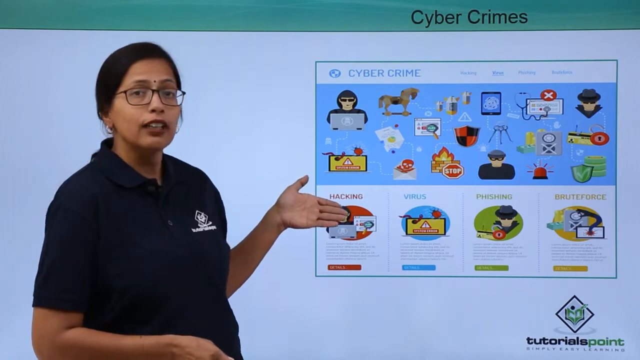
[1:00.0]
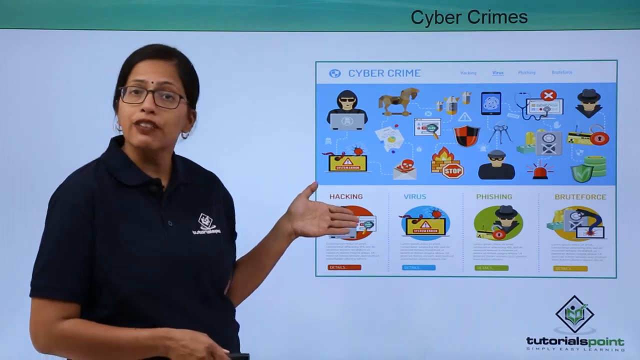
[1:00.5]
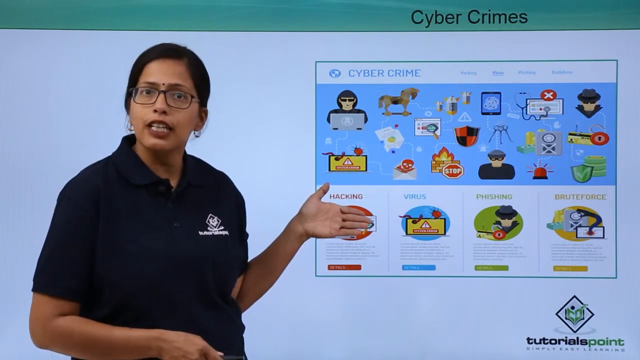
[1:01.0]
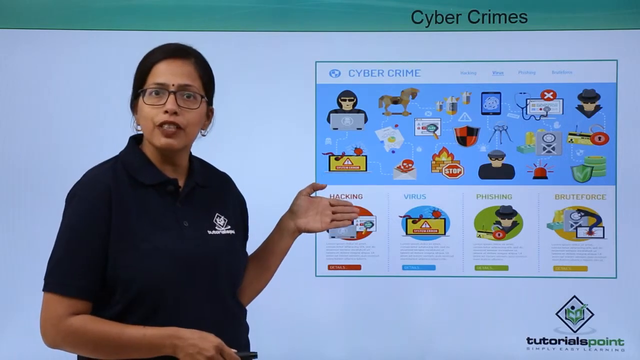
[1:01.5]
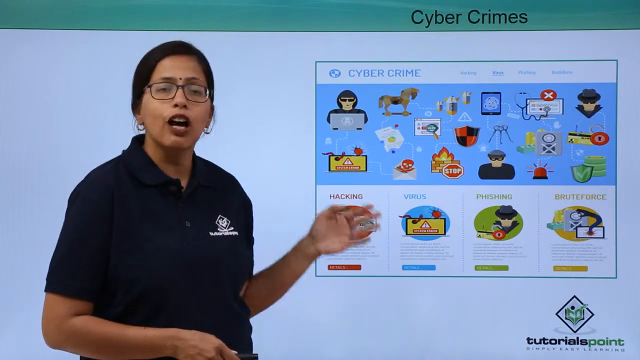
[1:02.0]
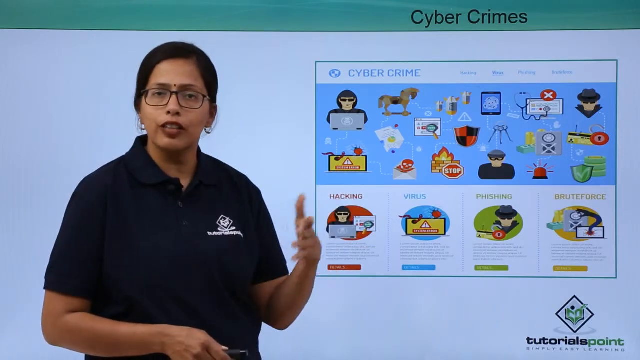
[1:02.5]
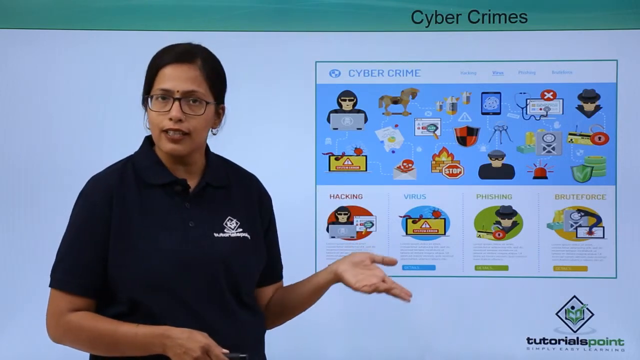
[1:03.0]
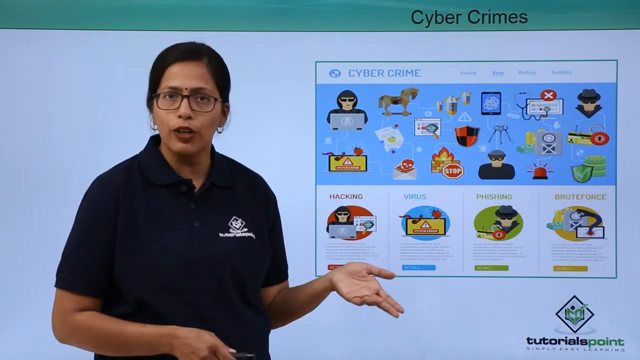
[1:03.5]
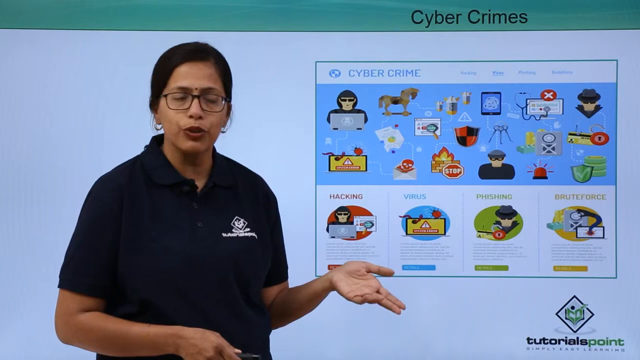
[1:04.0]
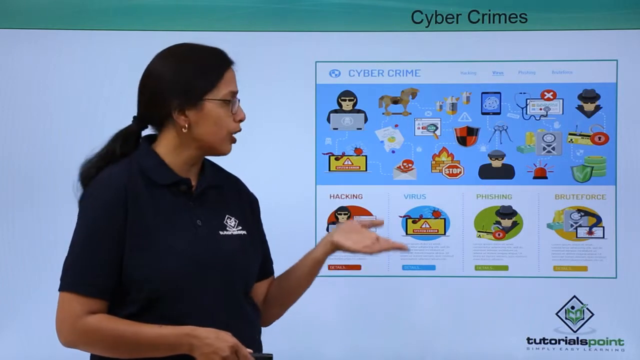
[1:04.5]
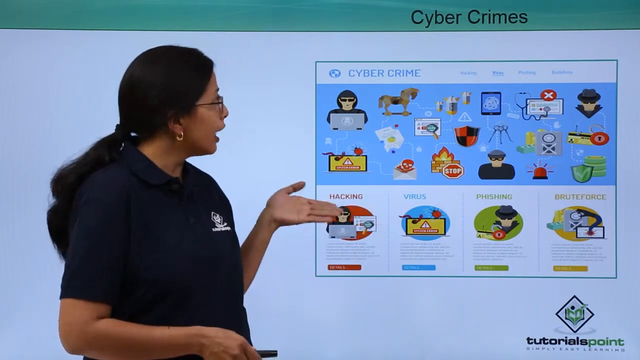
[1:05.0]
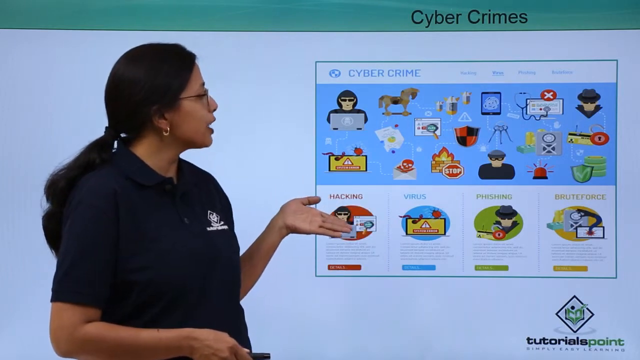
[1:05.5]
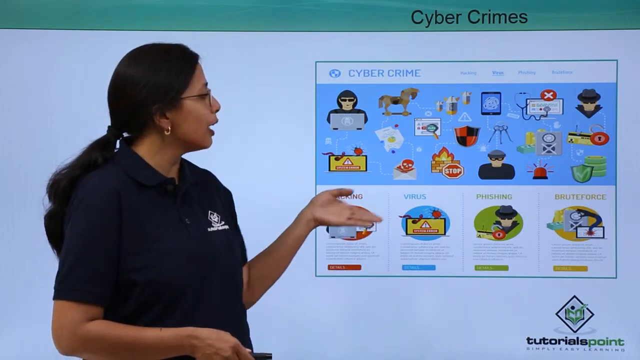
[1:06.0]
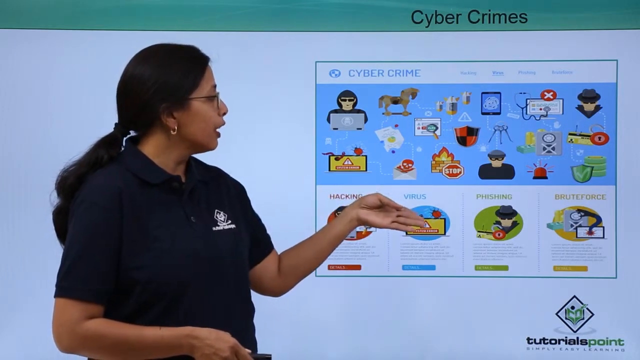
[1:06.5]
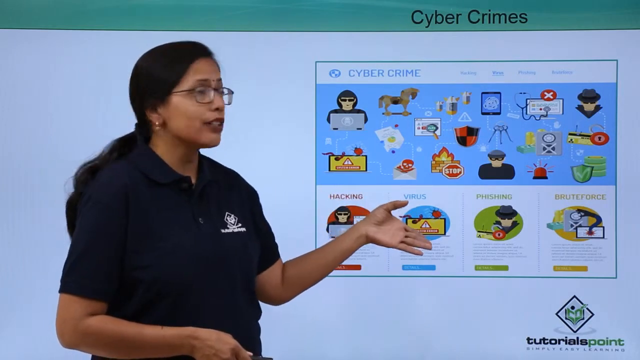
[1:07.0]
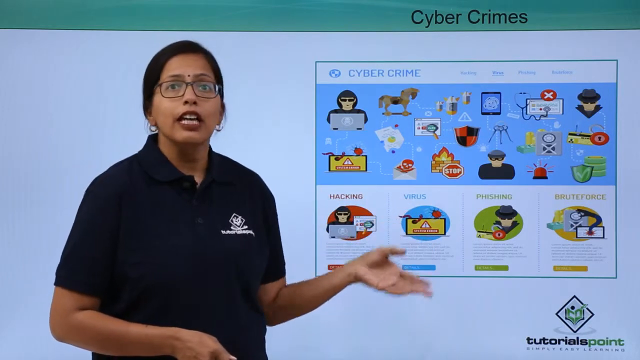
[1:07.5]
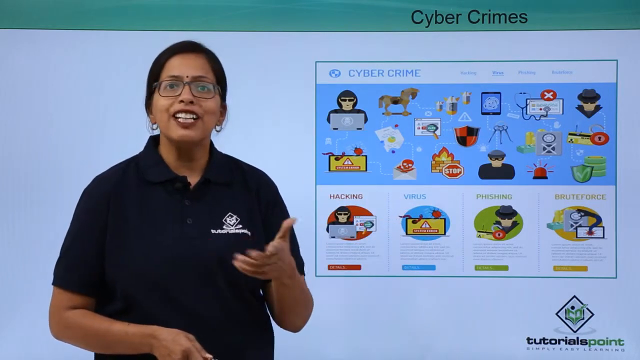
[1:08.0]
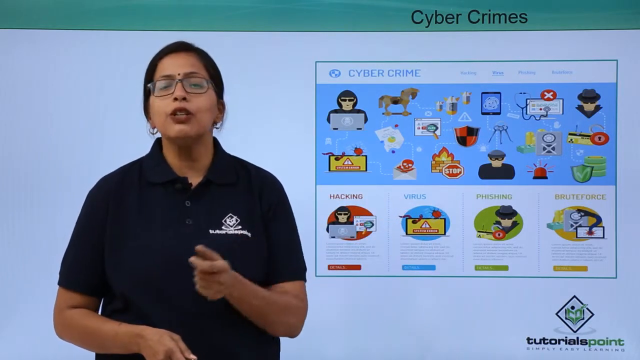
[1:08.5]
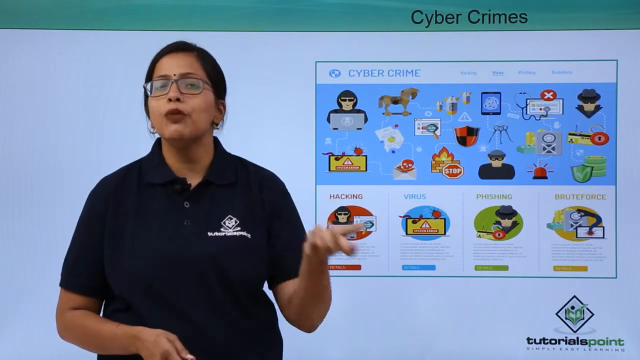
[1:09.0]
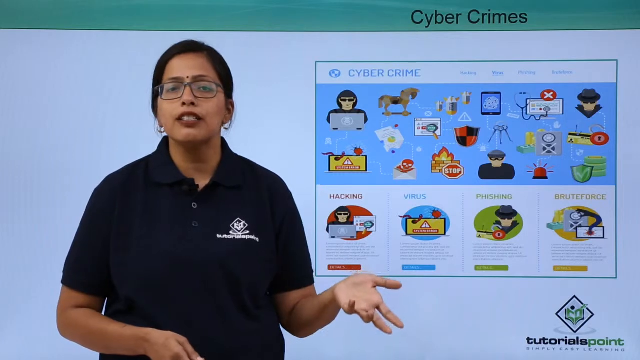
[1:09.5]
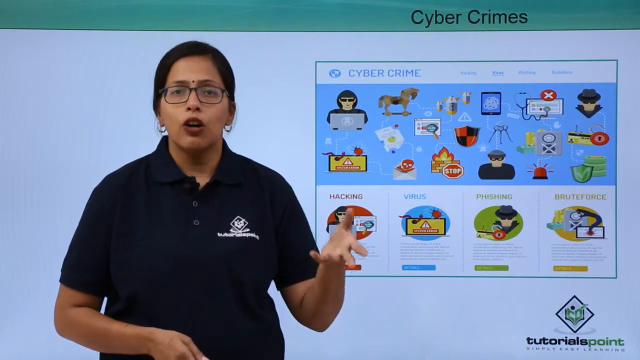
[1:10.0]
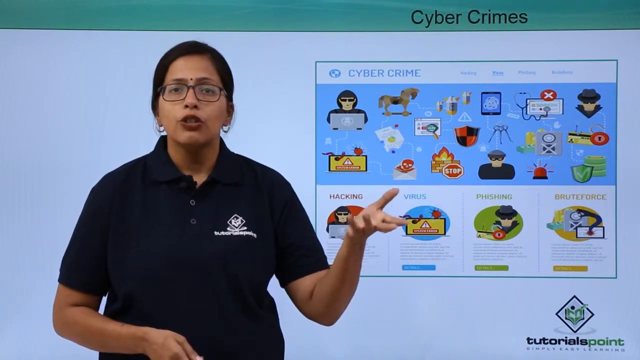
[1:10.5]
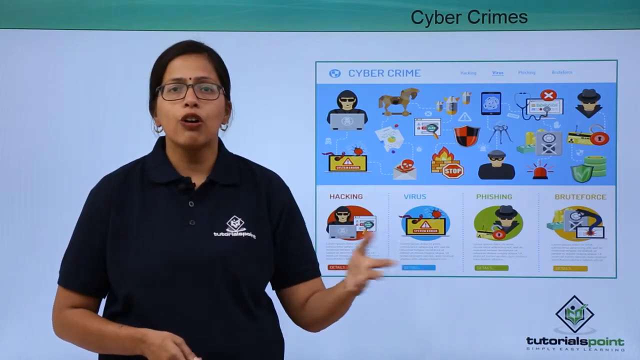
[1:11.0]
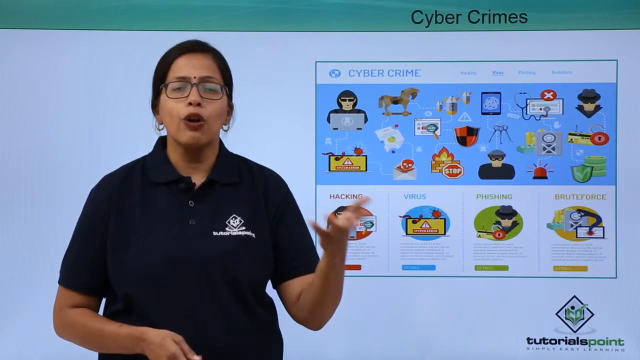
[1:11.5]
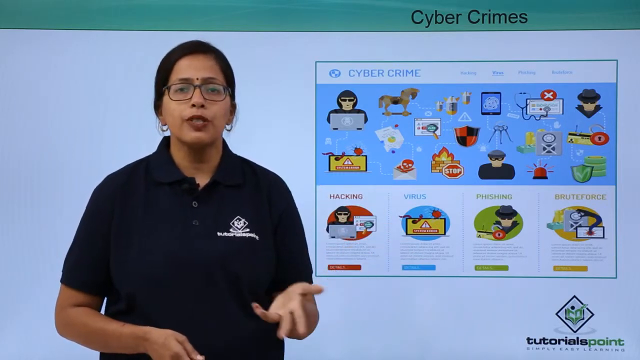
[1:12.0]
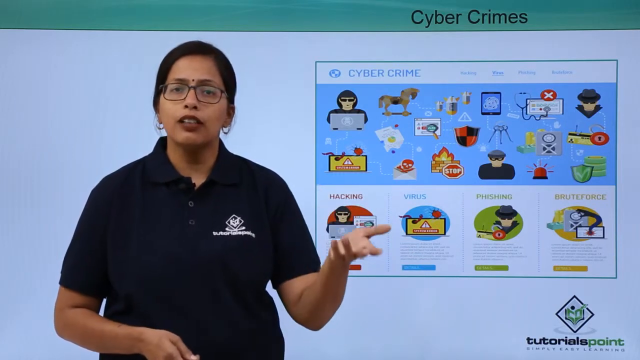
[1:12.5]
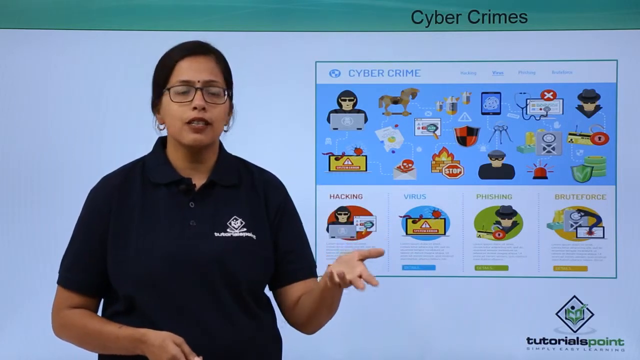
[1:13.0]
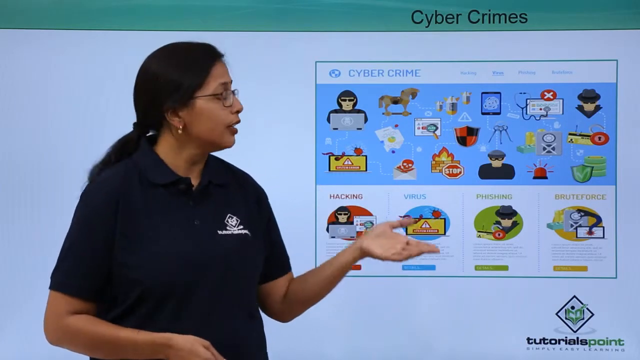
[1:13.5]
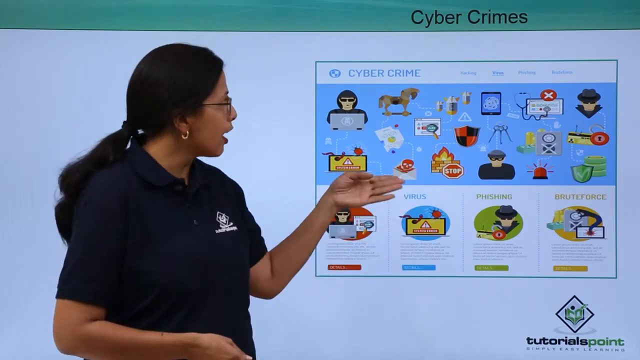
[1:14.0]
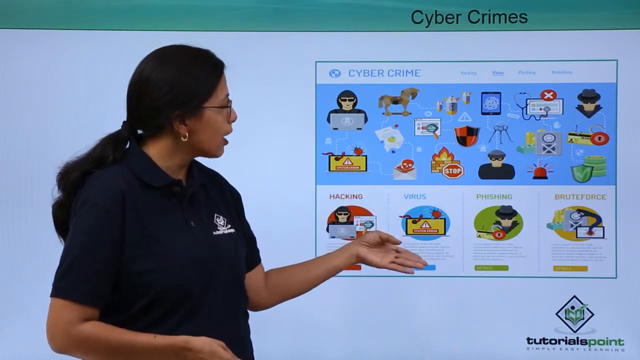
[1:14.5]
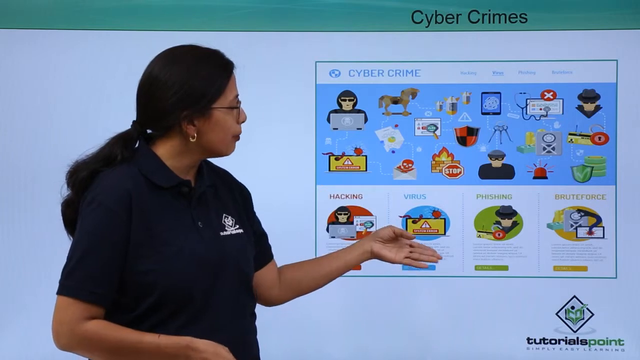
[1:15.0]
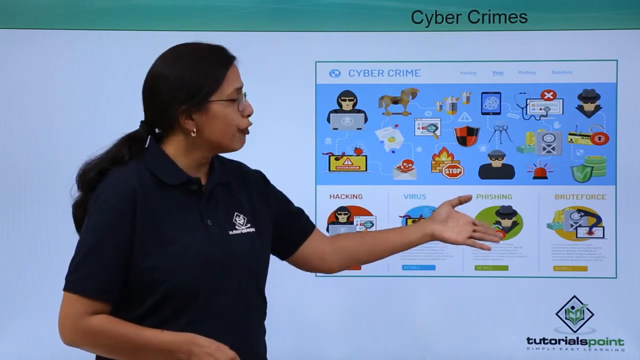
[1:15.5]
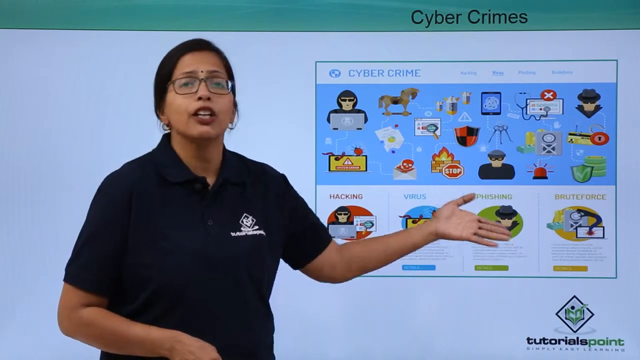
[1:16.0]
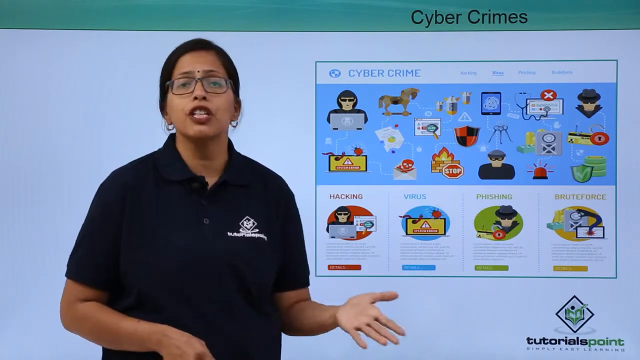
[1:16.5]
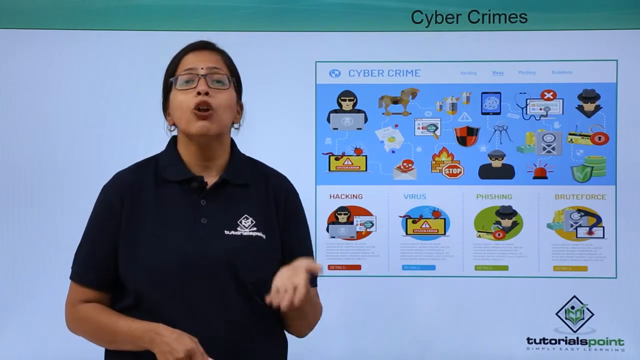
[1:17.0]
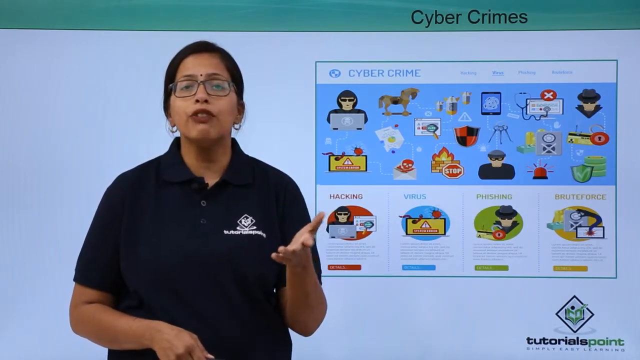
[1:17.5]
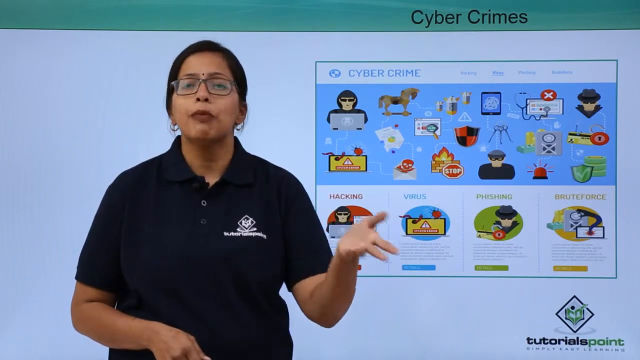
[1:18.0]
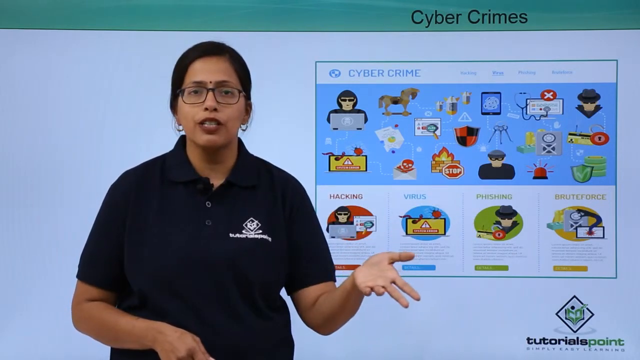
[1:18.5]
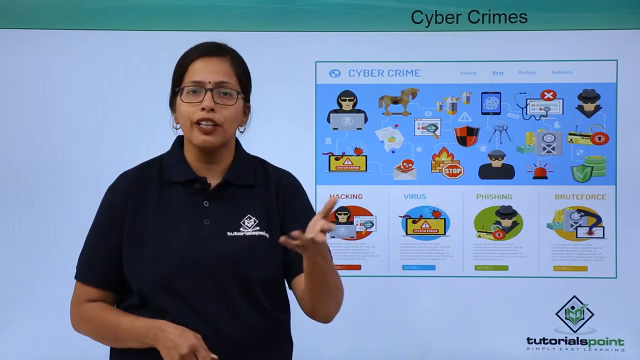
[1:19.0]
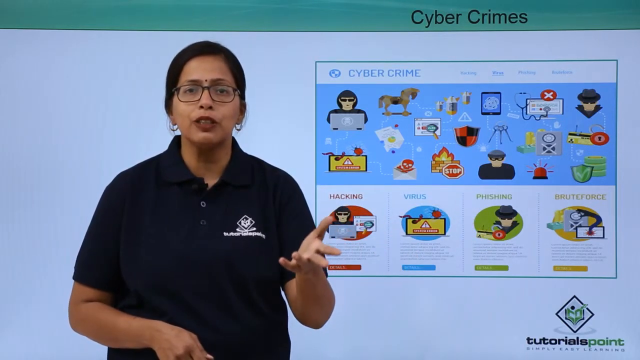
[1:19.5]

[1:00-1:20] The lecturer is an Indian lady wearing glasses, with a black dot in the middle of her eyebrows and black hair. She wears a black t-shirt with two buttons and a microphone attached to the collar. She is teaching about cybercrimes for tutorial points, whose slogan is "Simply Easy Learning". The slide shows the different types of cybercrime: hacking, virus, phishing and brute force, along with various pictures or clip arts for each type, including a horse, a man on a laptop, a danger sign, a firewall, various alarms and viruses.